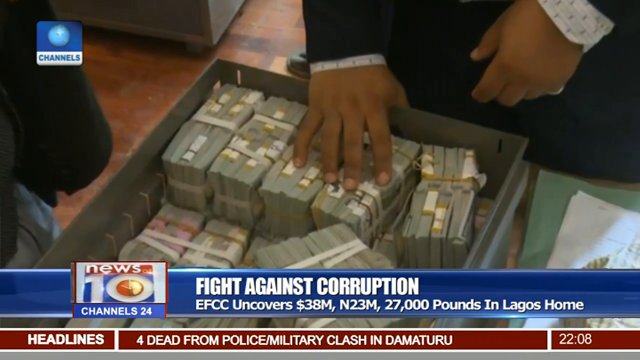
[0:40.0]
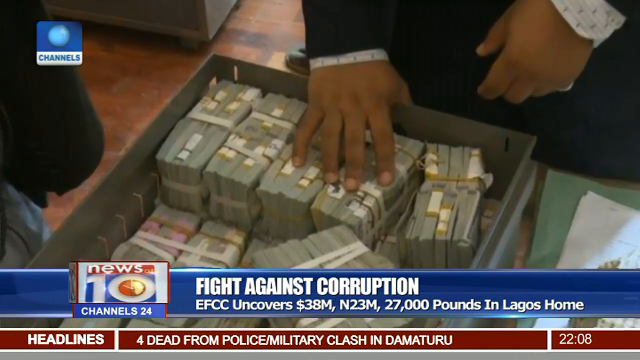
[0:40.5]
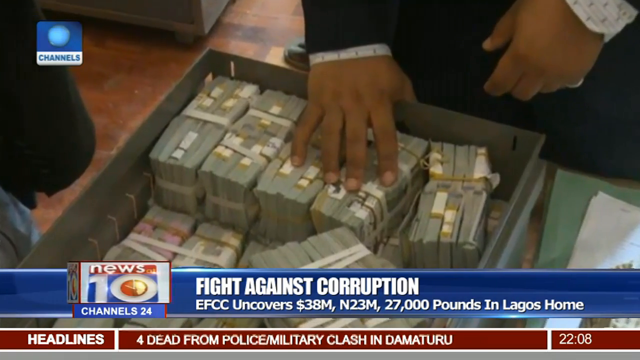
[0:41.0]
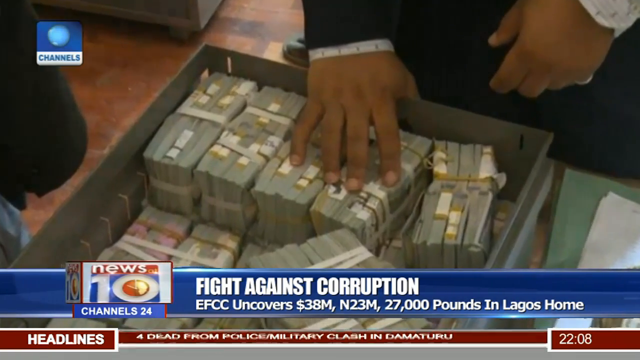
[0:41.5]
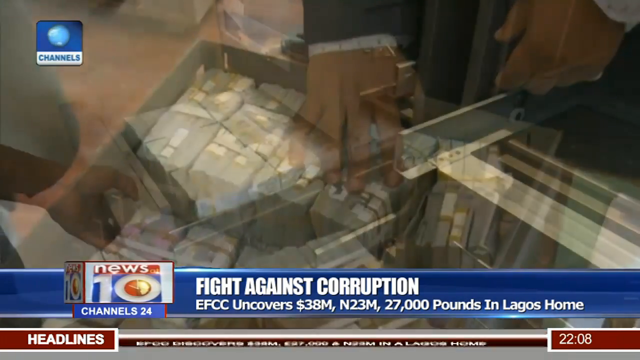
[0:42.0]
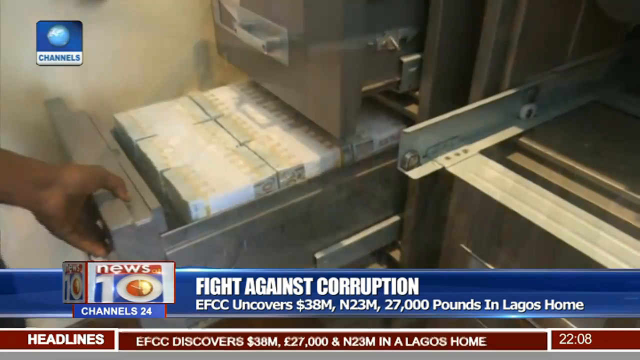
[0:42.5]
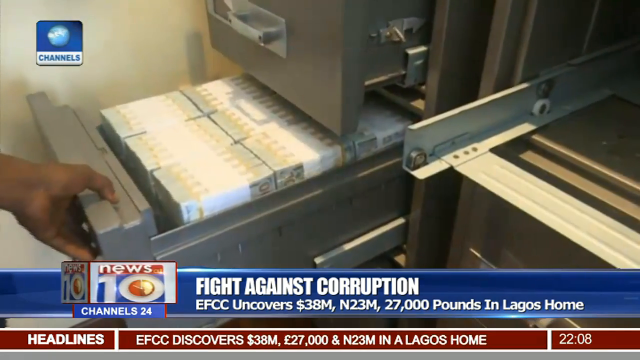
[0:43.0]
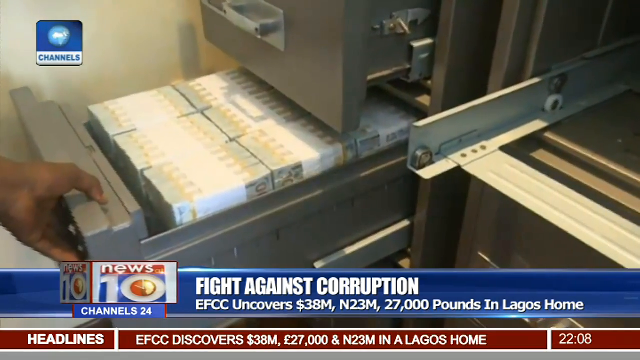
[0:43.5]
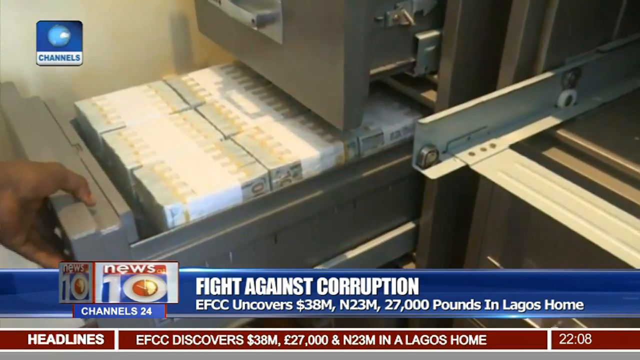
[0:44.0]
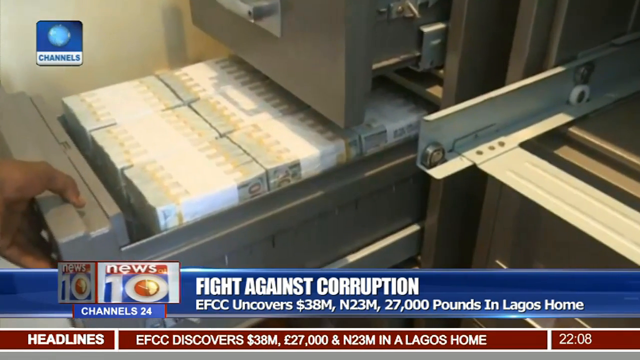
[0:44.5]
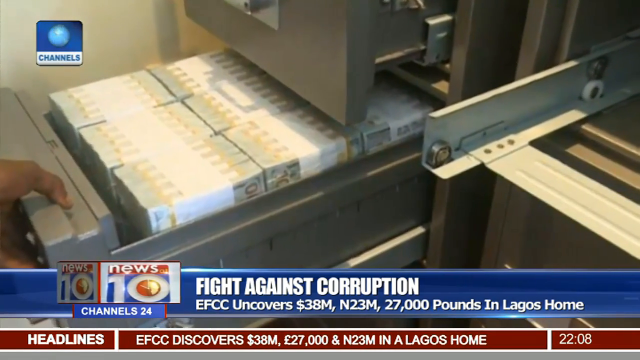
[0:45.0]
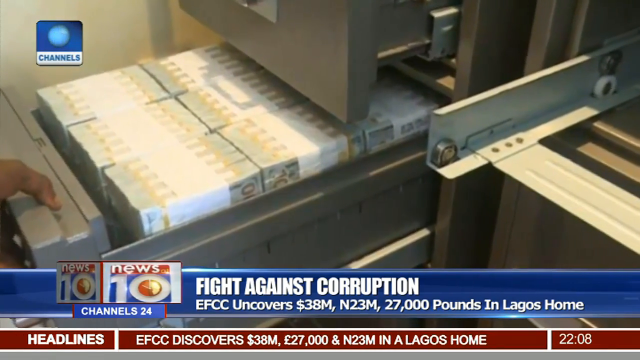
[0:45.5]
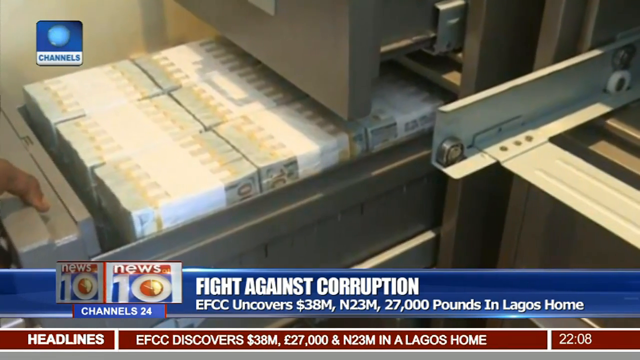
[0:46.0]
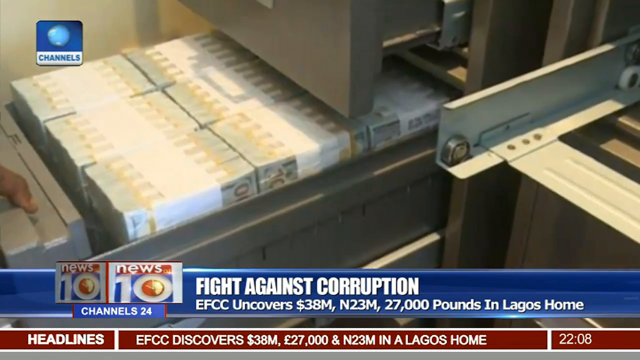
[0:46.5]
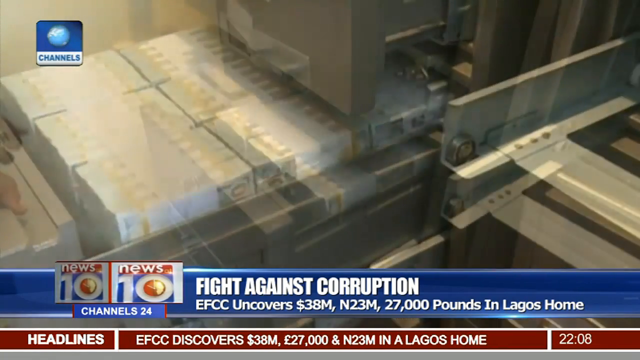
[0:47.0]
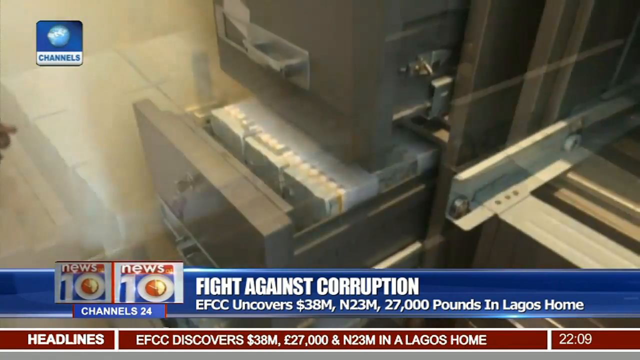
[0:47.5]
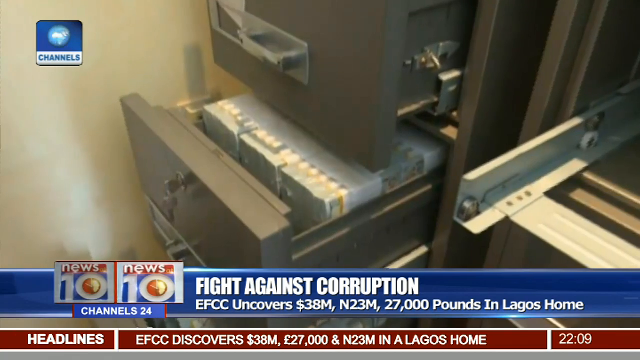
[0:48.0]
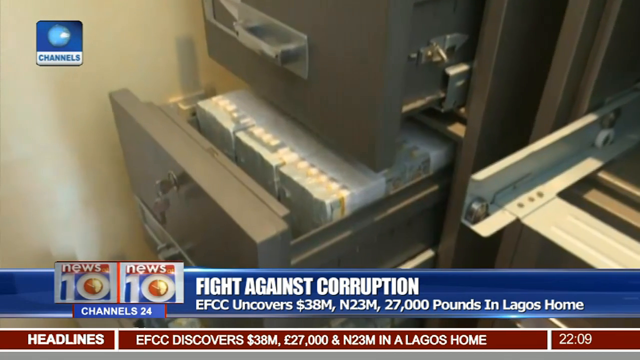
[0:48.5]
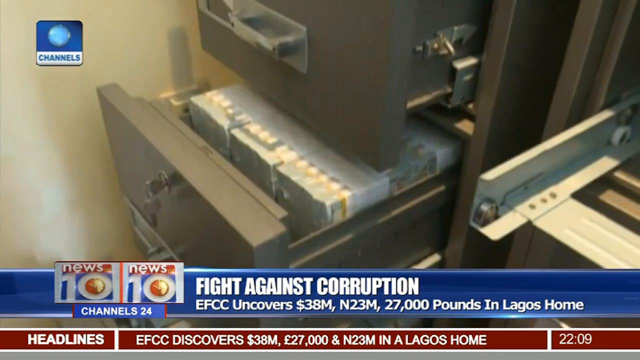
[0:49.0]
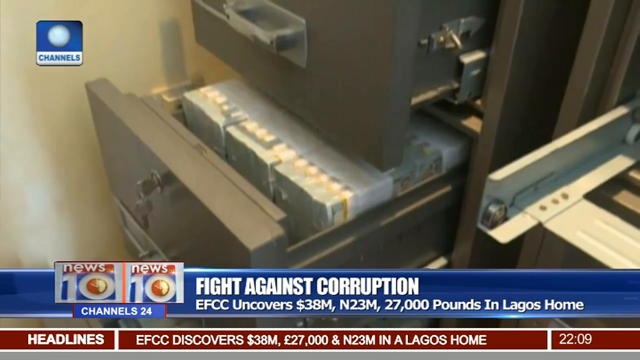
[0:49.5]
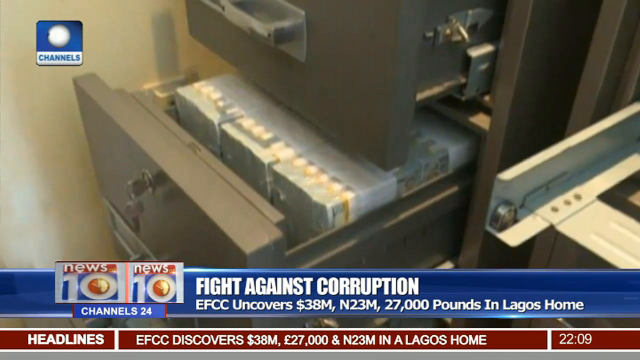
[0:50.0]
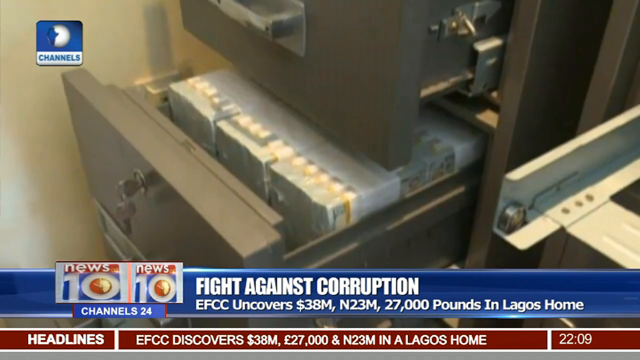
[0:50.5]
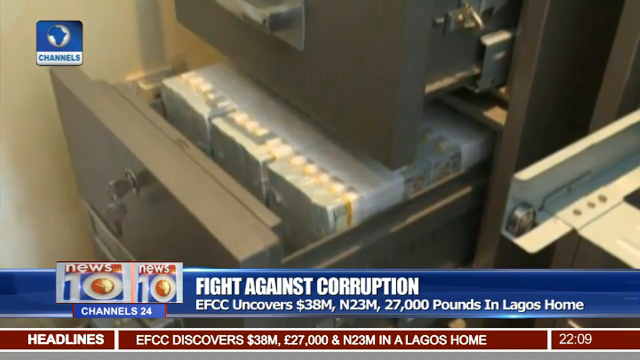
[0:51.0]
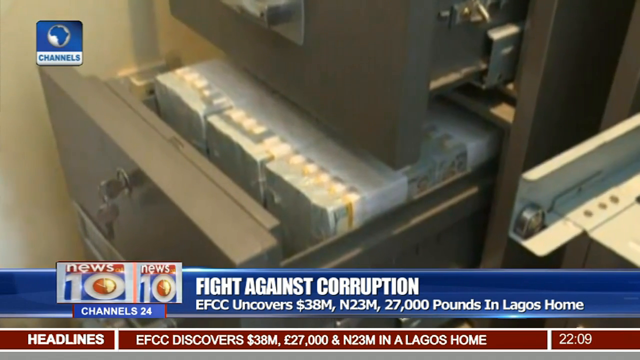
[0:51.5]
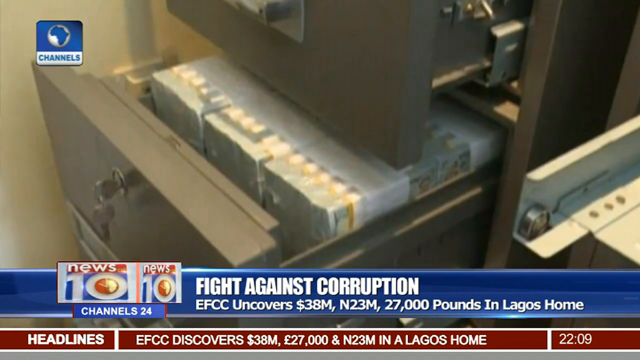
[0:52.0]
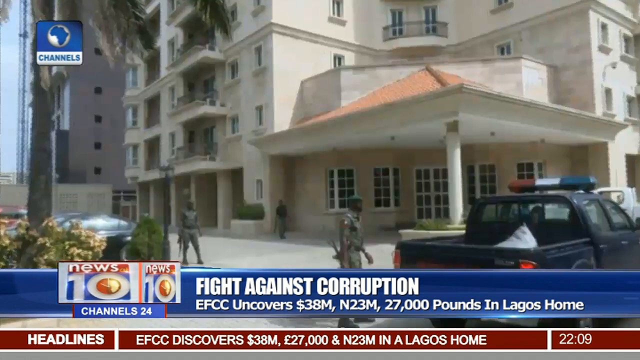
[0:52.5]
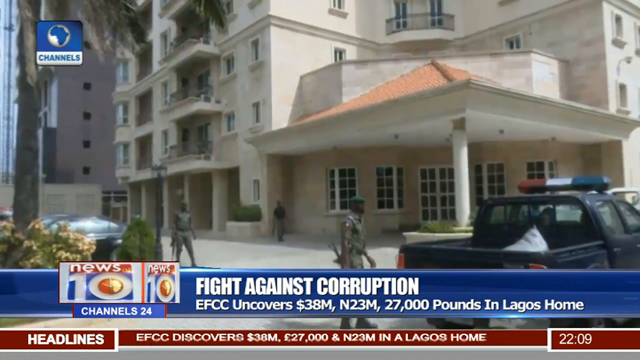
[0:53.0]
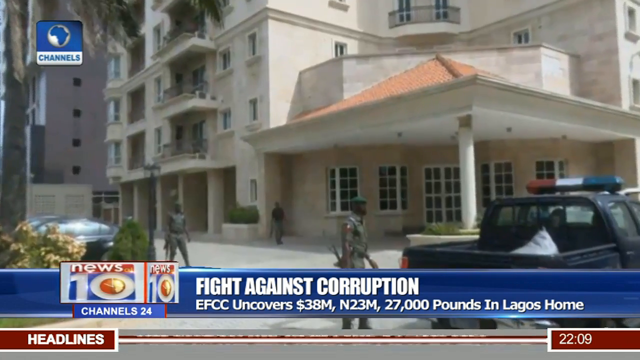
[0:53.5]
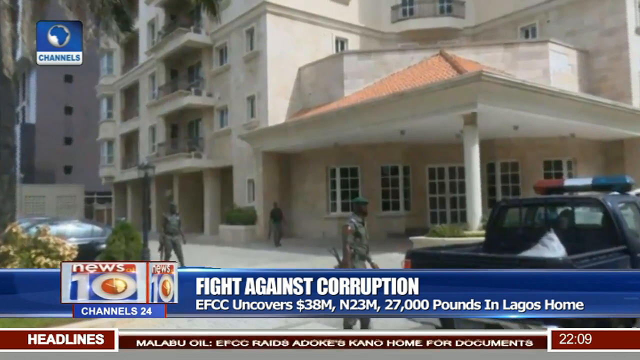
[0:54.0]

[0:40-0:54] A news story shows a picture with a man's hands in the background near a pile of money. The caption says "fight against corruption EFCC uncovers 38 million dollars at N23M 27,000 pounds in Lagos home," and the same text is also running in the headlines at the bottom, though that sometimes flips. Money is shown stored in drawers that look like filing cabinets. Then a very large home appears with police officers around it, and a truck has police lights of red, silver and blue on its top portion.